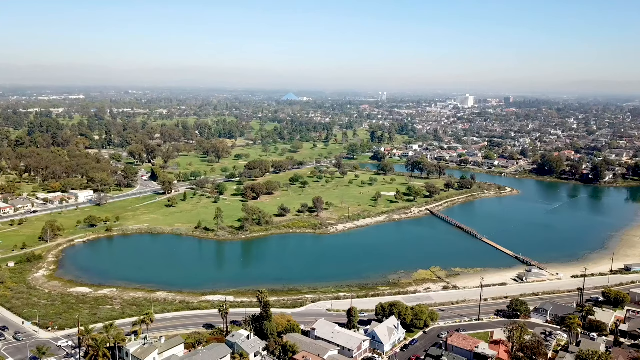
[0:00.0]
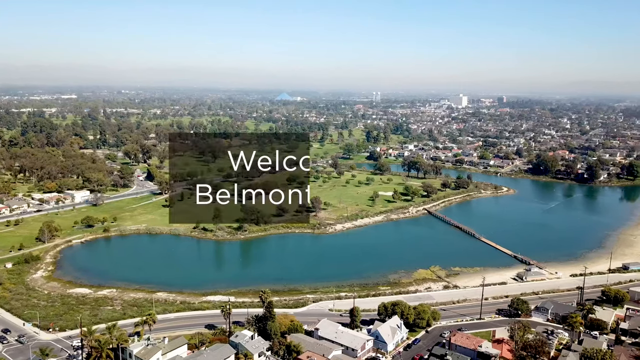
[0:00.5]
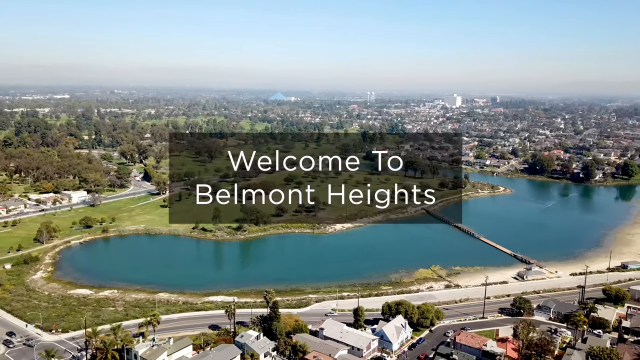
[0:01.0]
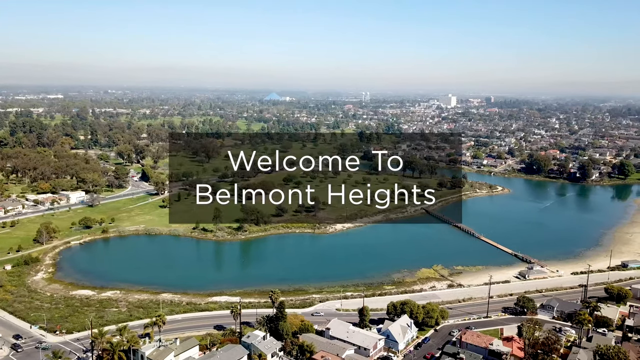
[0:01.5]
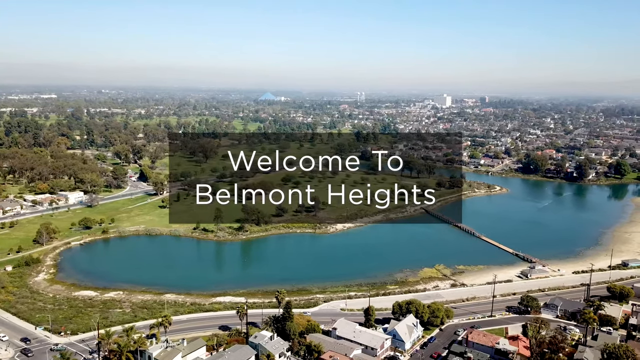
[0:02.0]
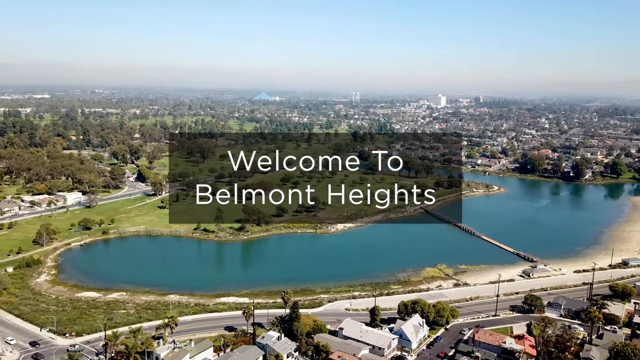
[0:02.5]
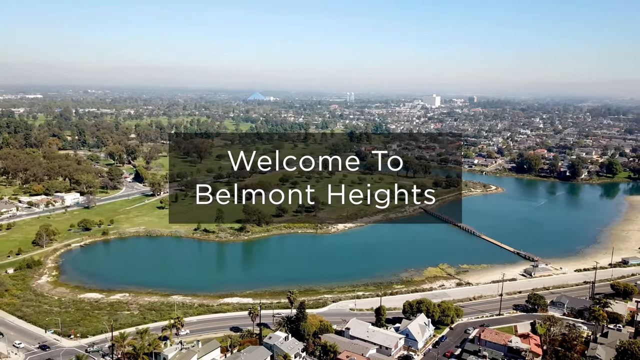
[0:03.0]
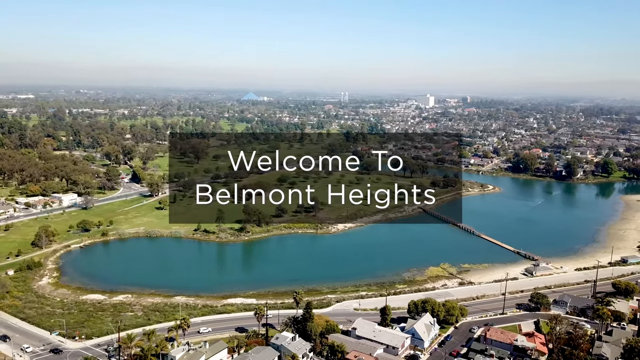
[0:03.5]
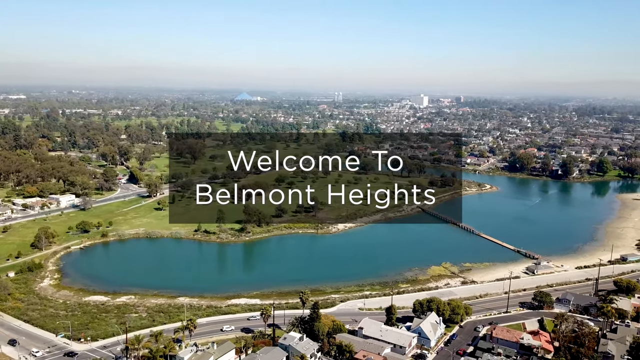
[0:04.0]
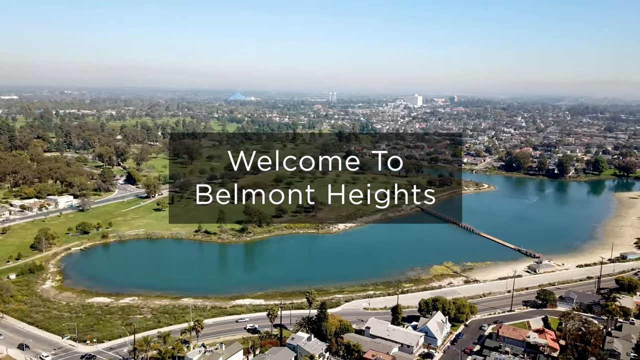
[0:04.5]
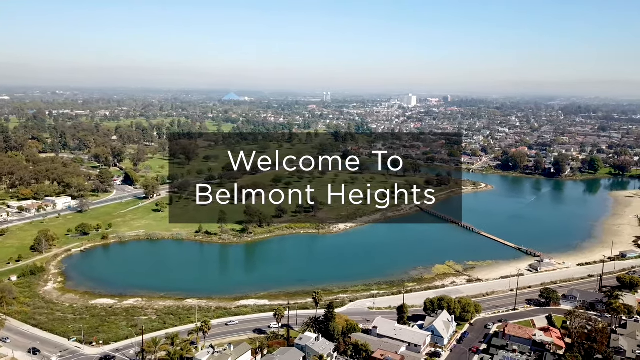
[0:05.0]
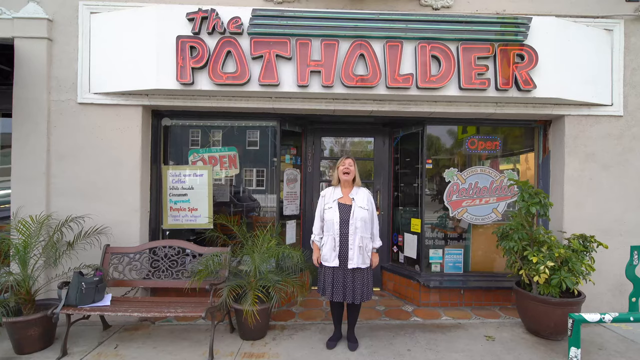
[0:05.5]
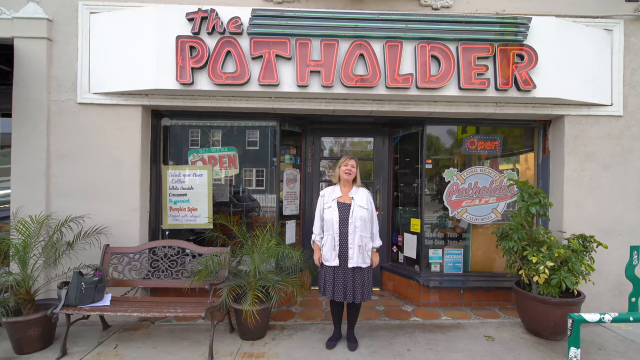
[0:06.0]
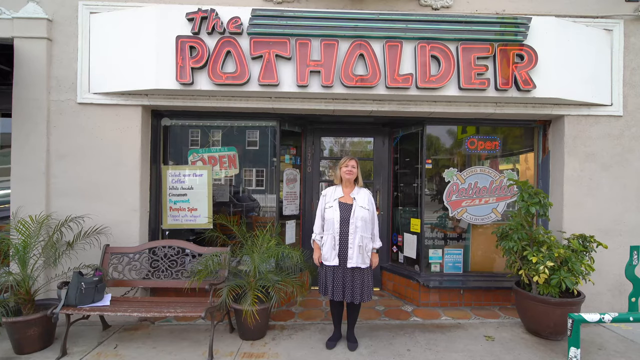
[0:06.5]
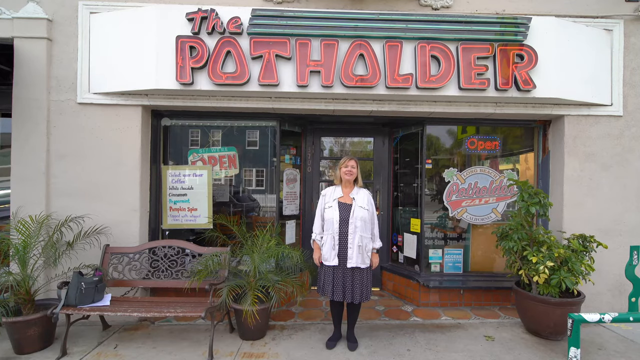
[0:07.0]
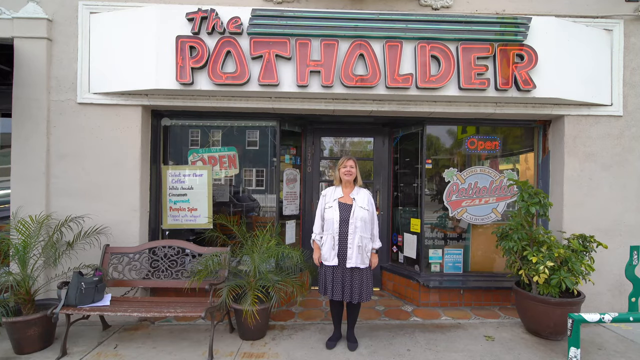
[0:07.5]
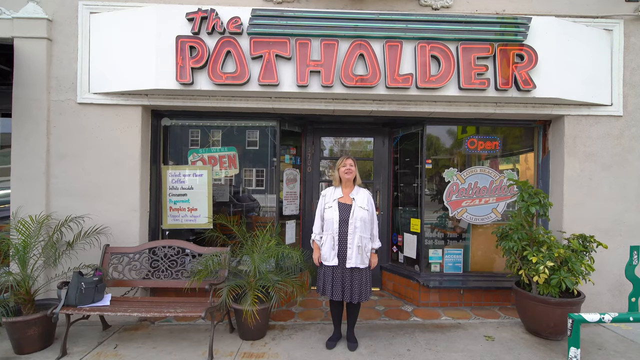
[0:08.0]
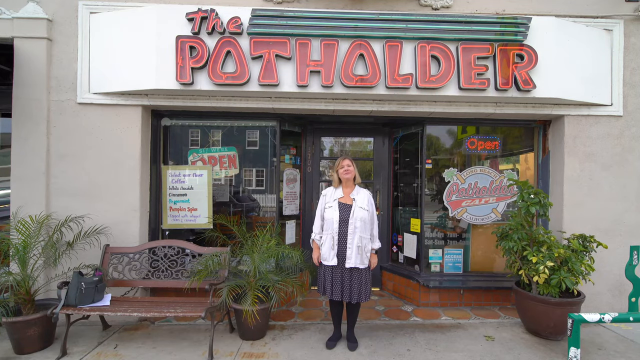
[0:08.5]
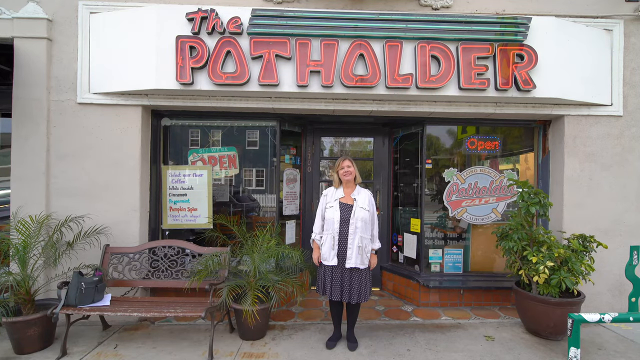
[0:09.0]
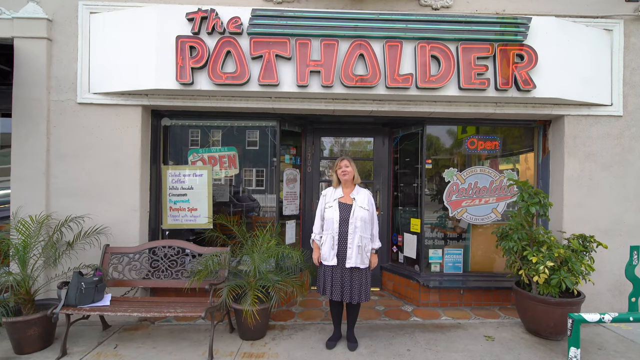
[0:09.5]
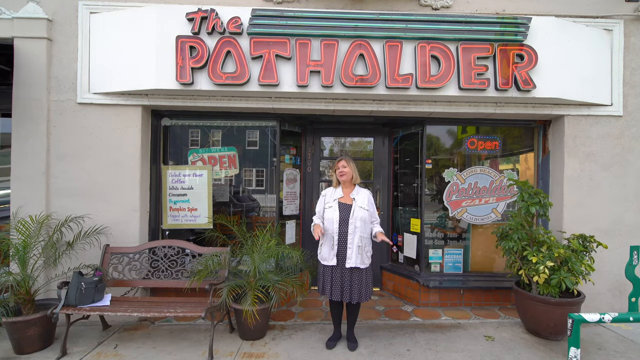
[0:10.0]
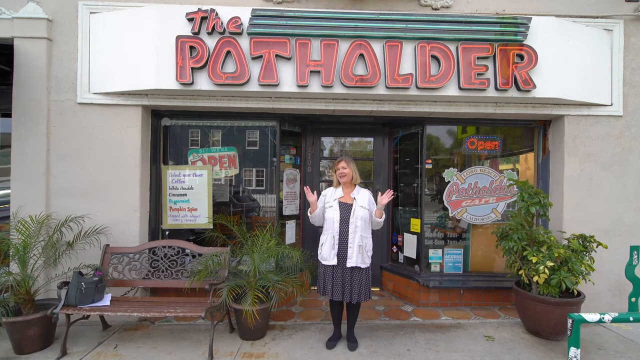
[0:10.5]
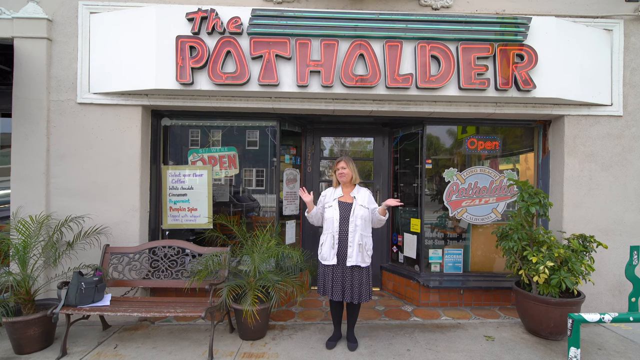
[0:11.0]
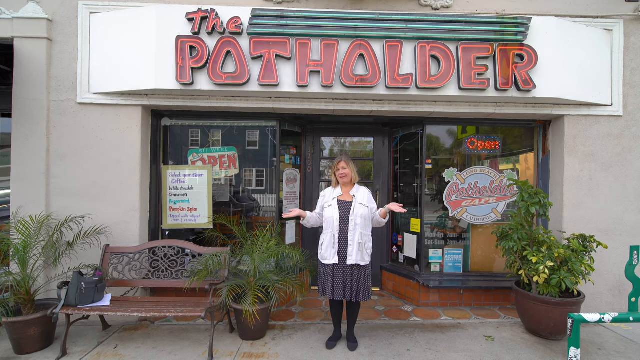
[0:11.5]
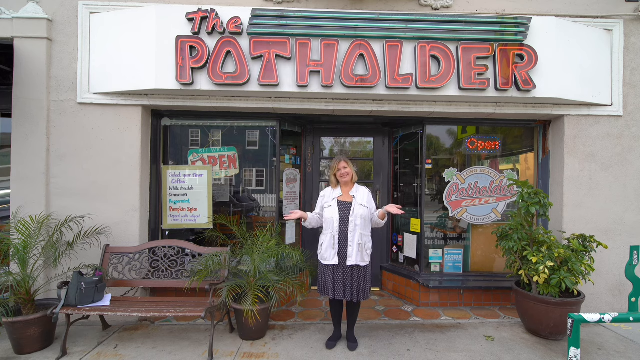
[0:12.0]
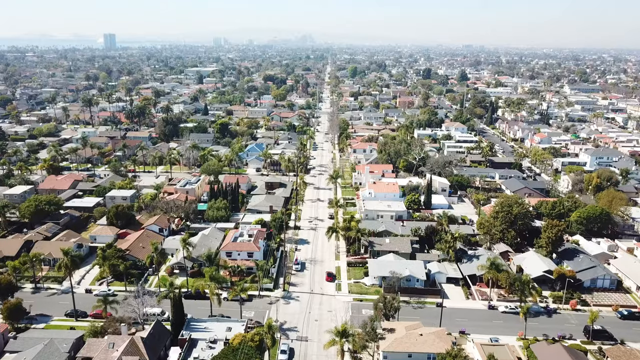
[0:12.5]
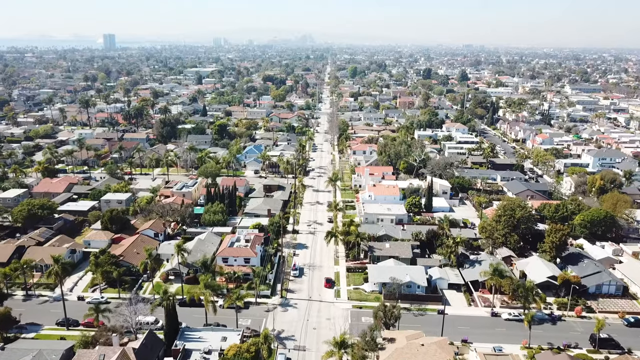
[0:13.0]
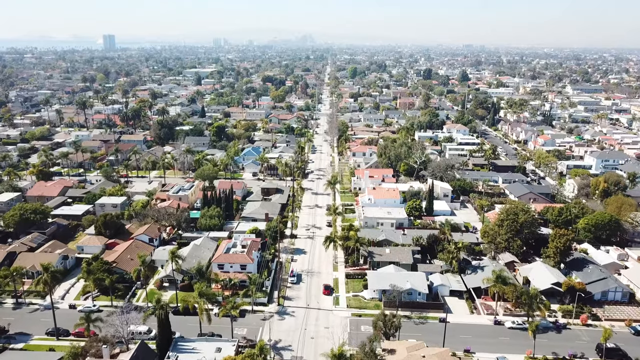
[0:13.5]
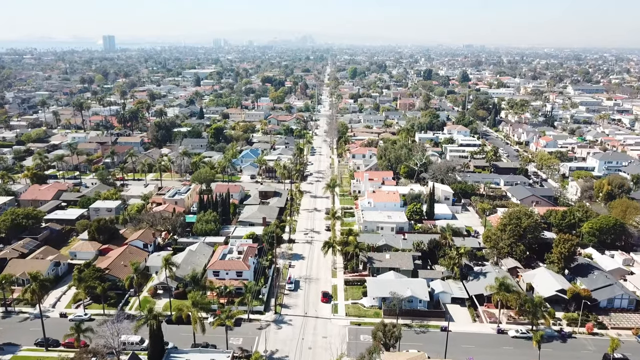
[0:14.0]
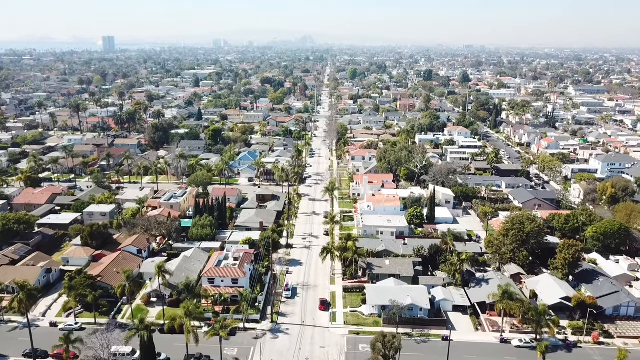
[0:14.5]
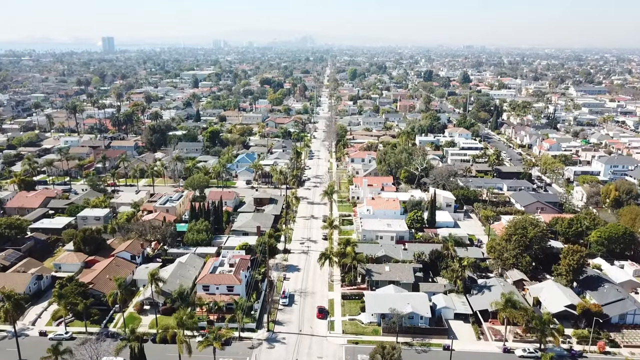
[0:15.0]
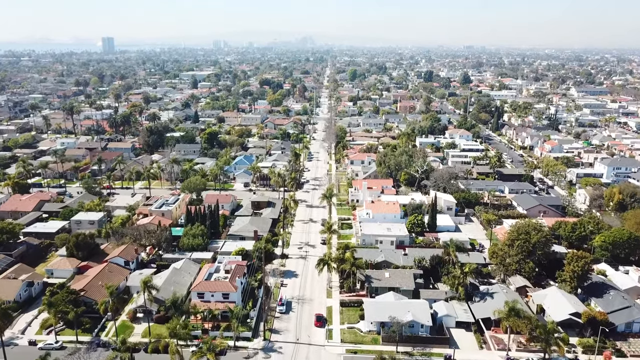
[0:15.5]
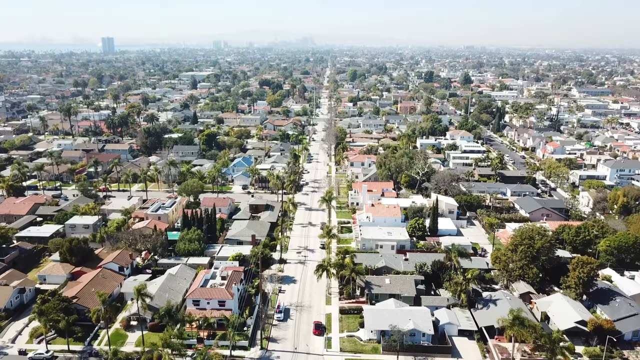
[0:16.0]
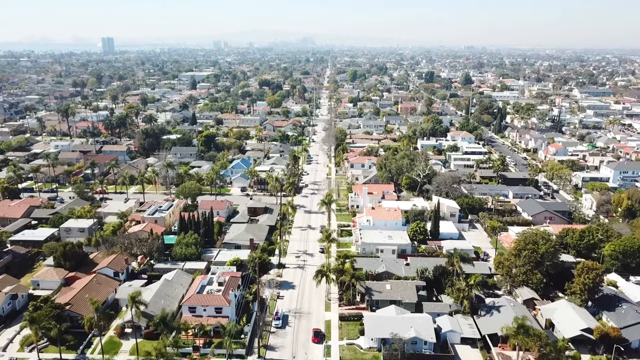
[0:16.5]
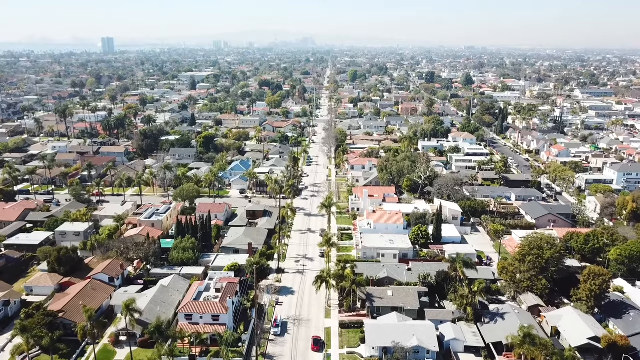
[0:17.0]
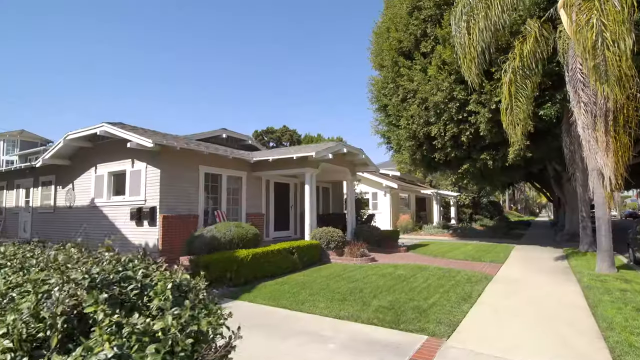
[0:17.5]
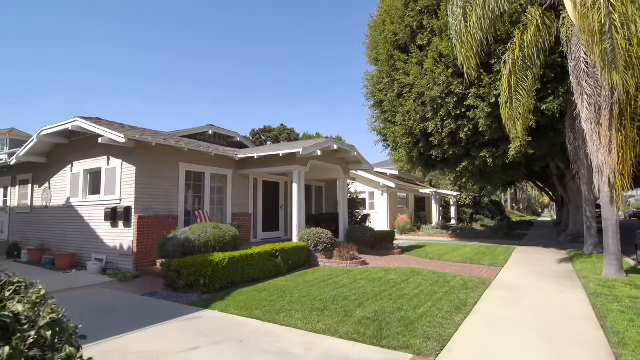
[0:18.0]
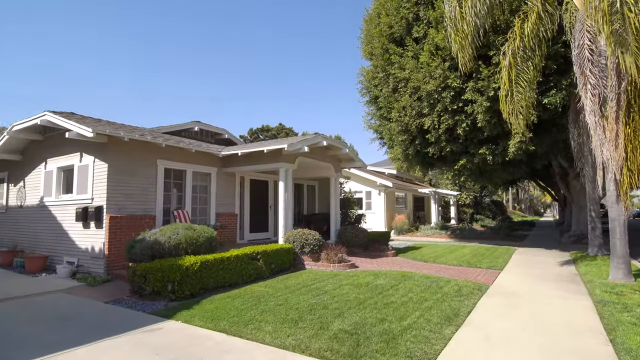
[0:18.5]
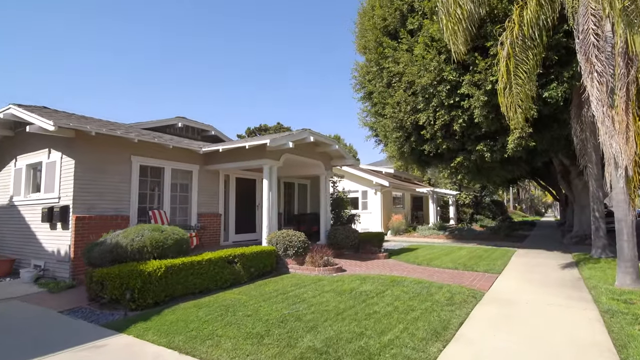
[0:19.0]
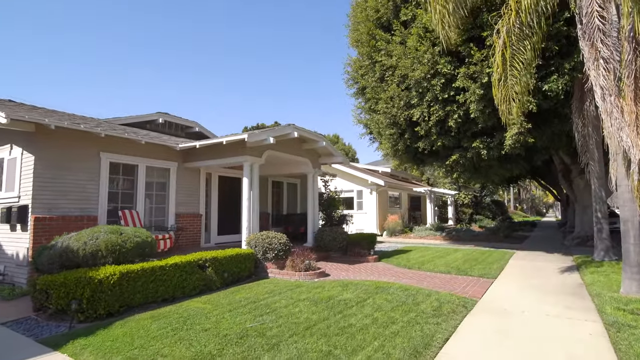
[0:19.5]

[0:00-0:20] The video opens with an aerial view of water or a river that appears to be surrounded by a clean suburb. It then shifts to a woman standing in front of a shop, wearing socks, a white shirt and a grey skirt. She is gesturing as if she is introducing something. Behind her is the shop, with stickers and probably the shop's name and what it sells; big letters reading "The Potholder" appear along with stickers. The video then shifts to a suburb, followed by a closer look at the suburb, which is very clean, with a lawn on the side. The area is not gated; it looks clean and safe, with green lawns outside.